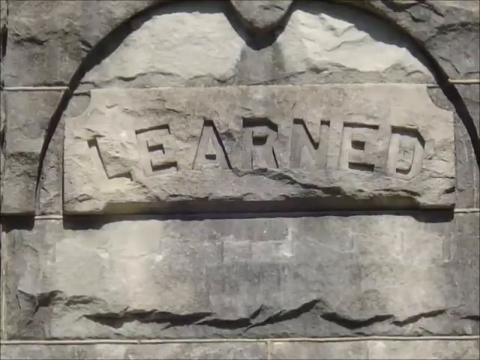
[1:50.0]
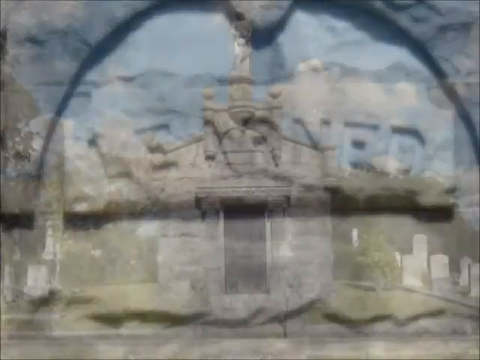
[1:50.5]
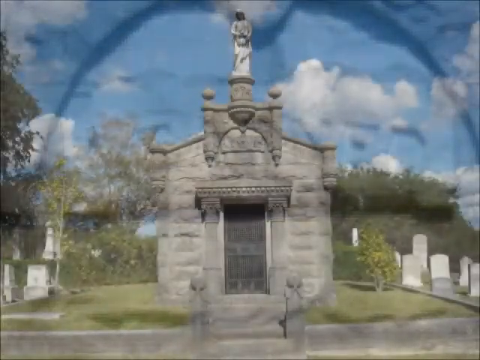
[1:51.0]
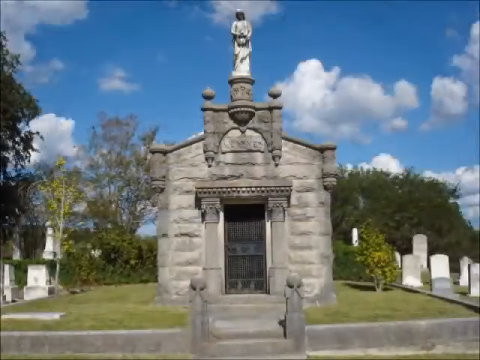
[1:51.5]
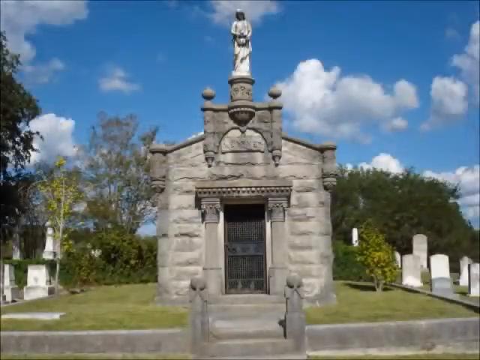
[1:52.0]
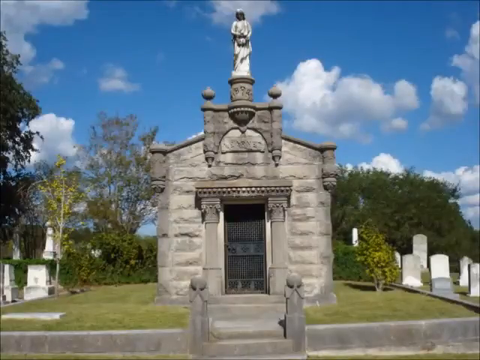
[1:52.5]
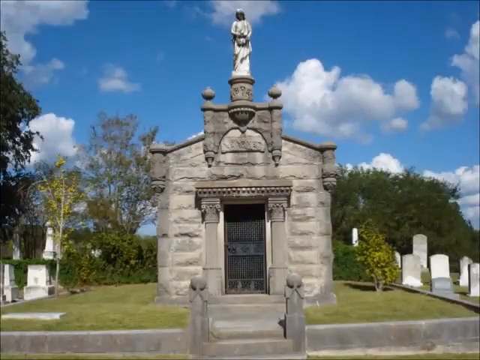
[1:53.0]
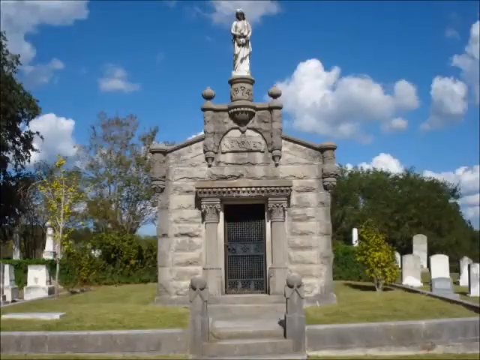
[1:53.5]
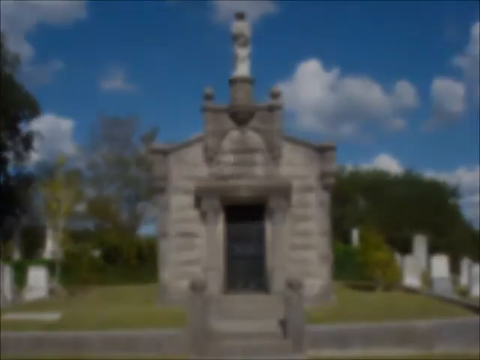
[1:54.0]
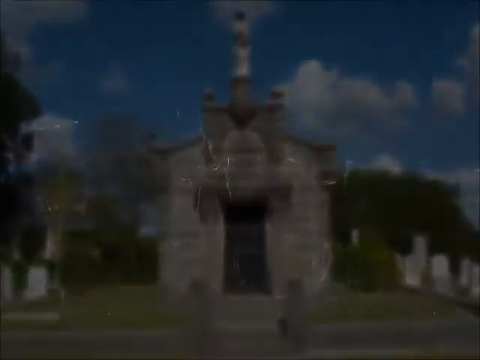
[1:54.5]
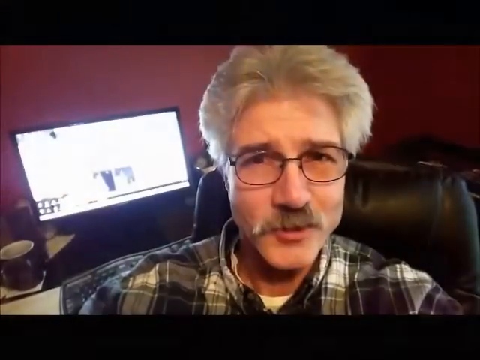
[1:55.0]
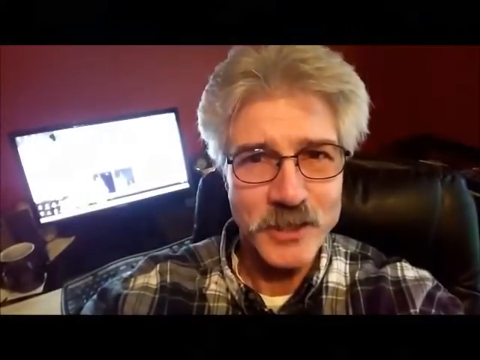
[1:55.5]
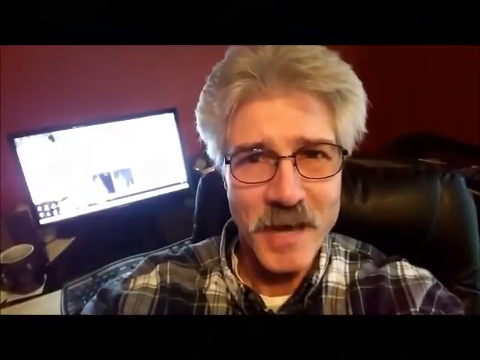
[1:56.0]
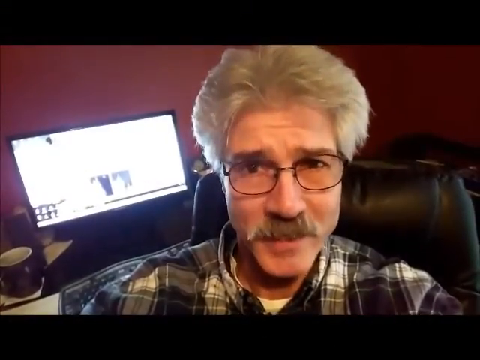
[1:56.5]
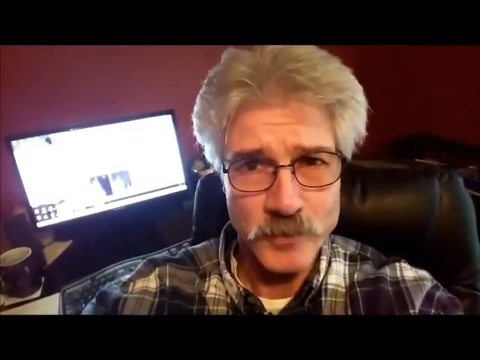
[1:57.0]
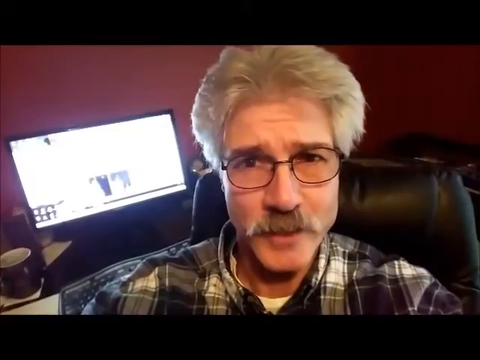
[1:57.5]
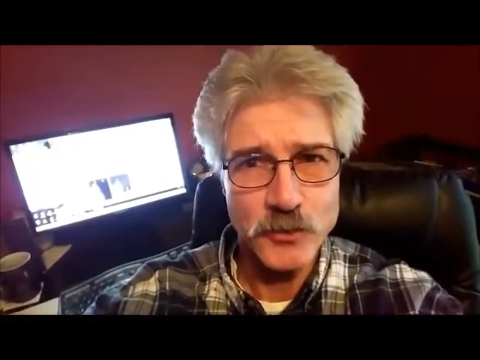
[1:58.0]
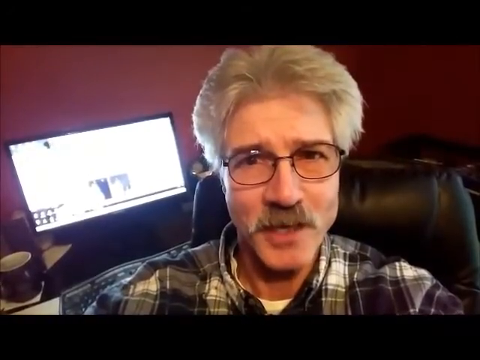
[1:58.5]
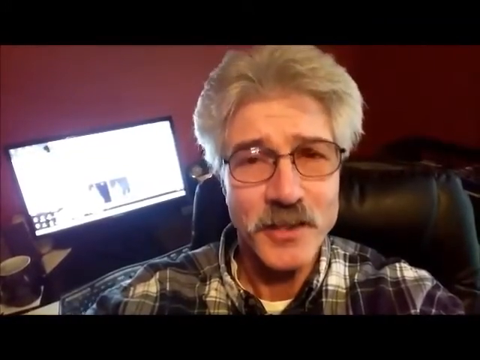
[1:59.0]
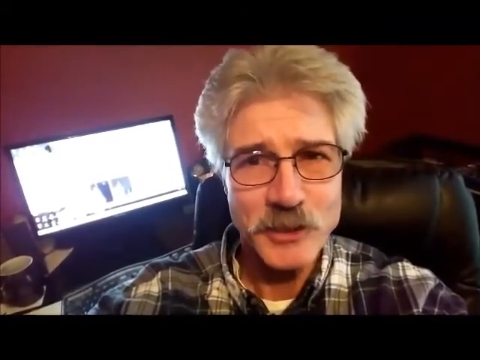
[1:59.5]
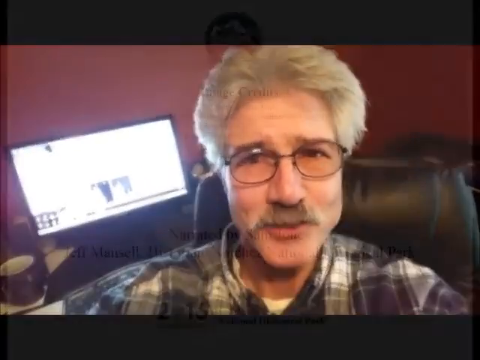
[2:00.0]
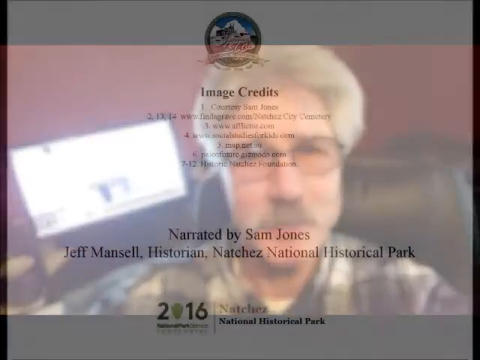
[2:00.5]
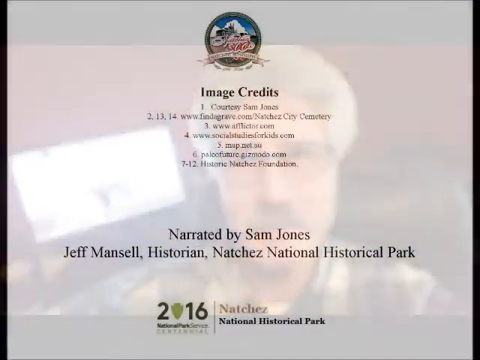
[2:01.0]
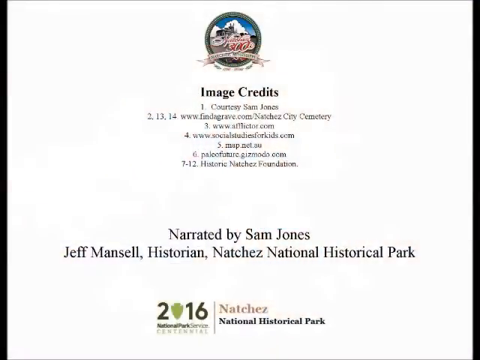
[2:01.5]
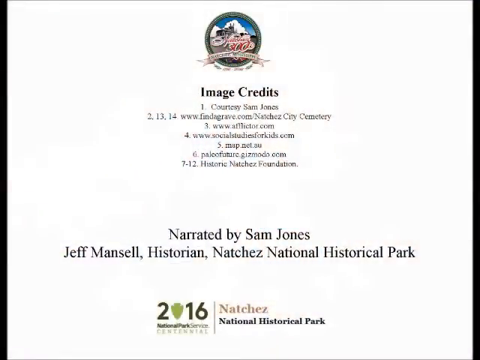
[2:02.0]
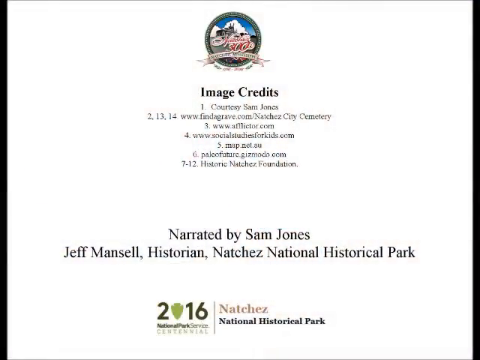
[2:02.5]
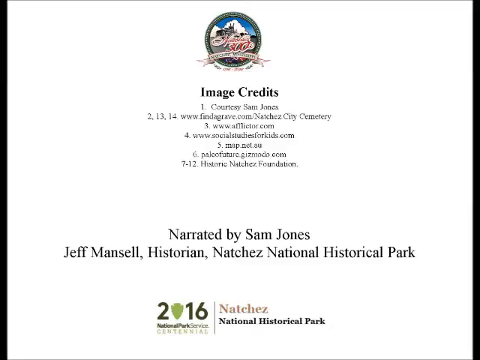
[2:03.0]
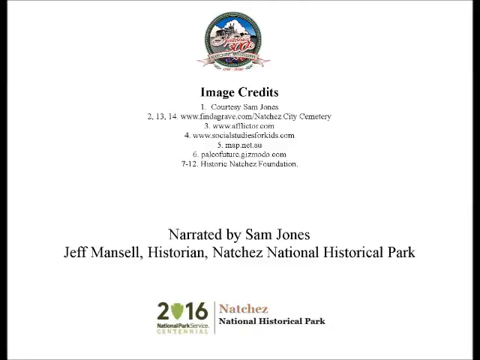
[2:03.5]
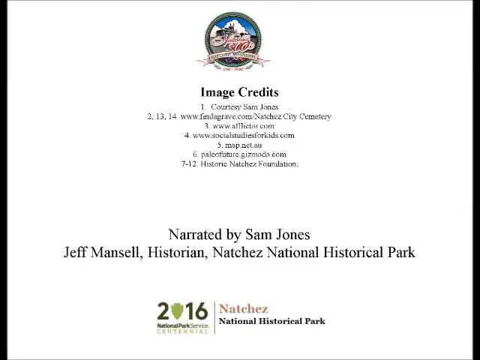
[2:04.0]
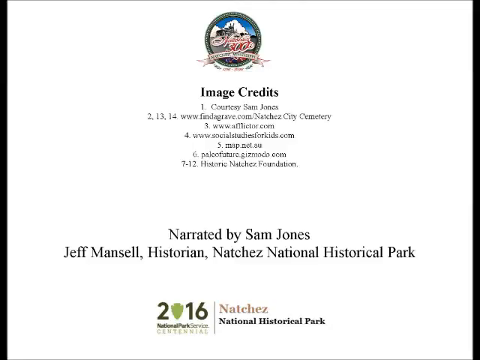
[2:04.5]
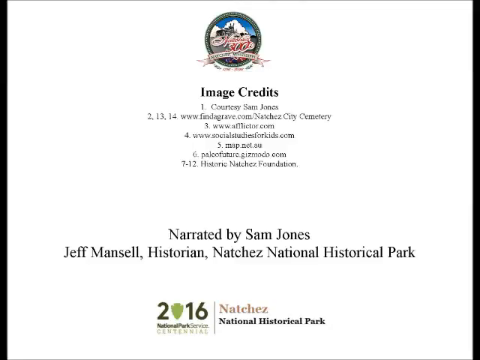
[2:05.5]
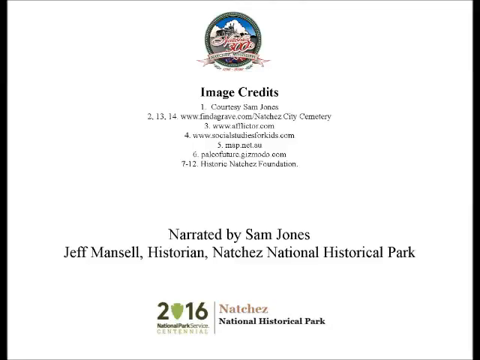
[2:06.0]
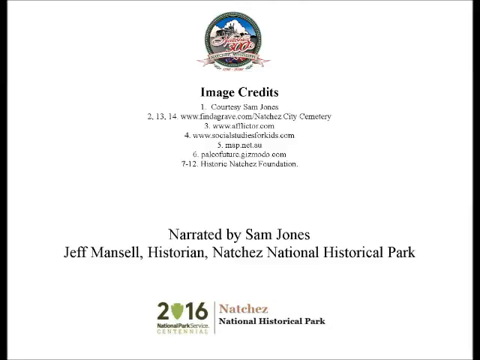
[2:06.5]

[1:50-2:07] The name Leonard carved into the stone, seemingly a memorial, is seen in close-up, followed by a full view. It looks like he was buried above ground in a brick-covered tomb, which has a black door; at the top, what looks like a statue of an angel appears to be looking over him. Then the video shows footage of an unidentified man, maybe in his 40s or 50s, with glasses and a mustache, sitting at his desk and speaking. He wears a long-sleeved, apparently flannel, collared shirt, with a computer behind him and a mug in the background on his desk. Finally what seem to be the credits of the National Historical Park appear.